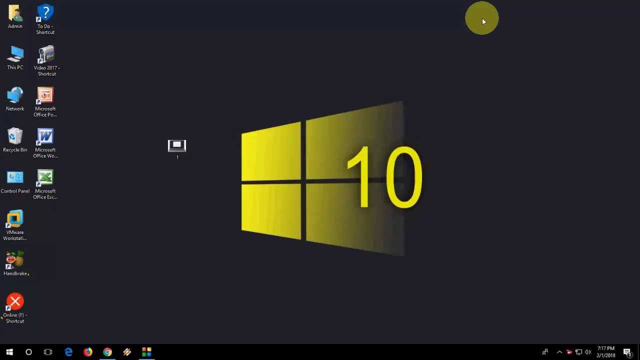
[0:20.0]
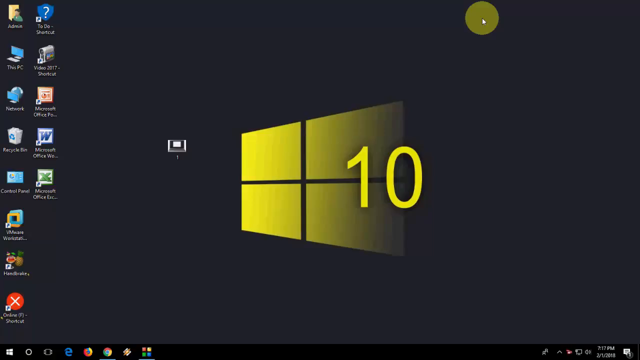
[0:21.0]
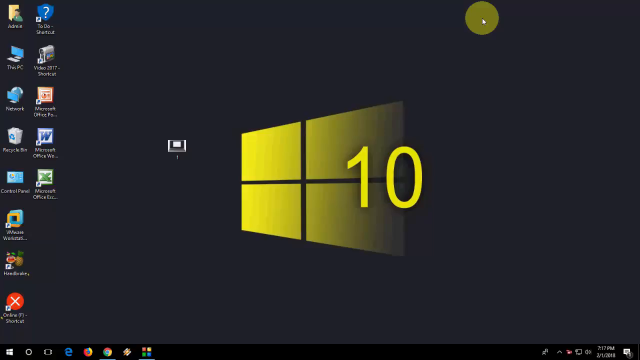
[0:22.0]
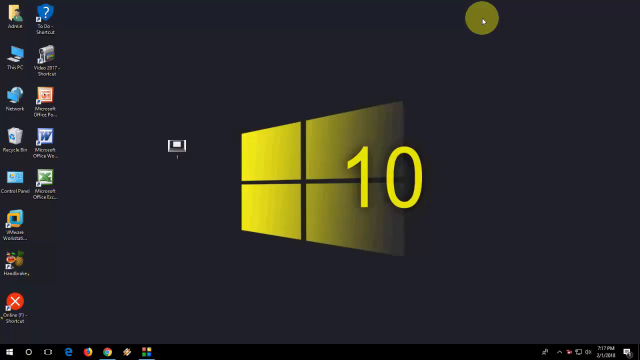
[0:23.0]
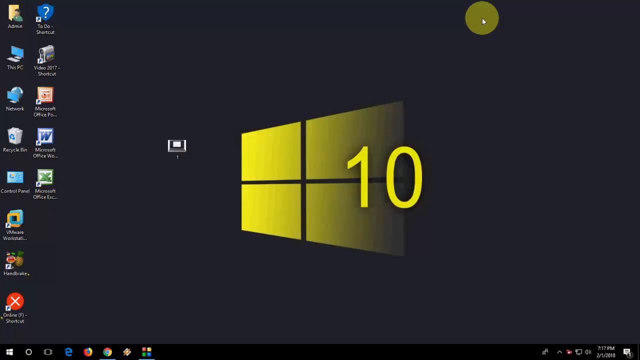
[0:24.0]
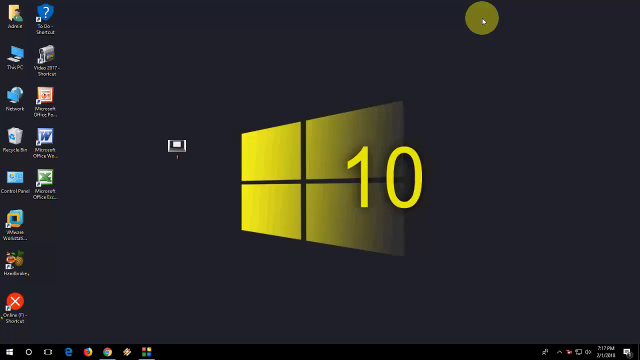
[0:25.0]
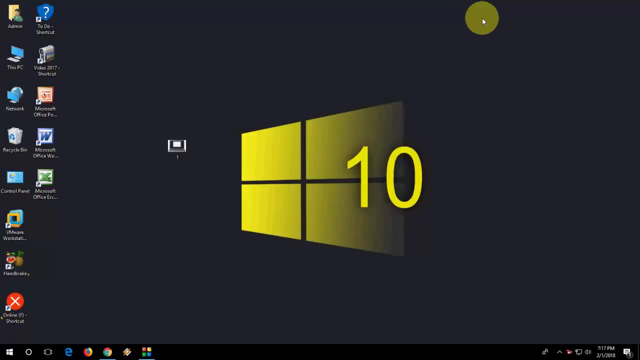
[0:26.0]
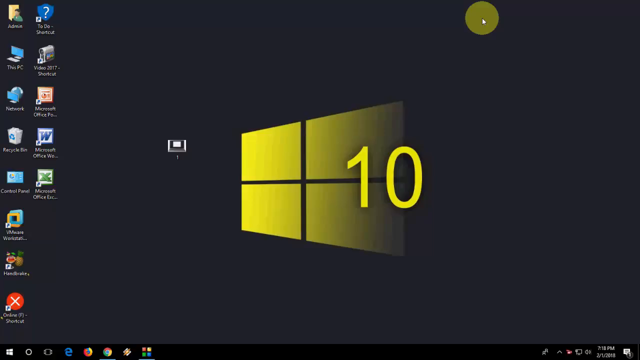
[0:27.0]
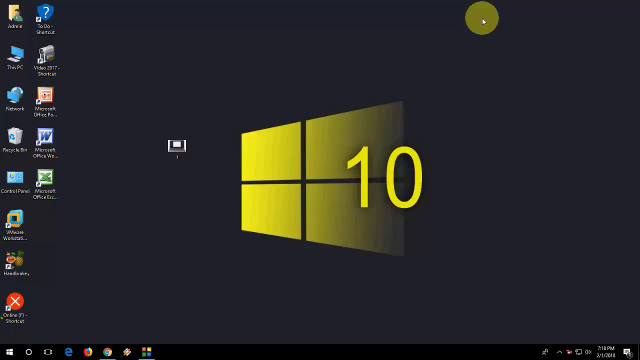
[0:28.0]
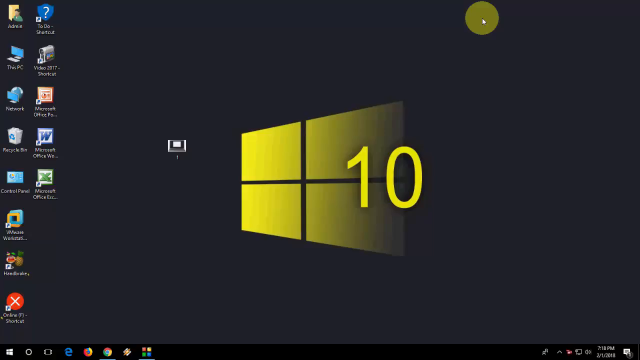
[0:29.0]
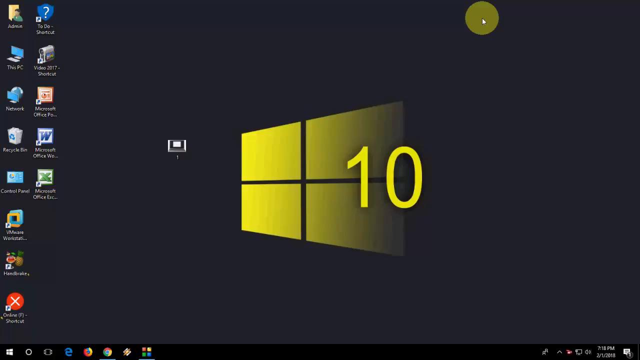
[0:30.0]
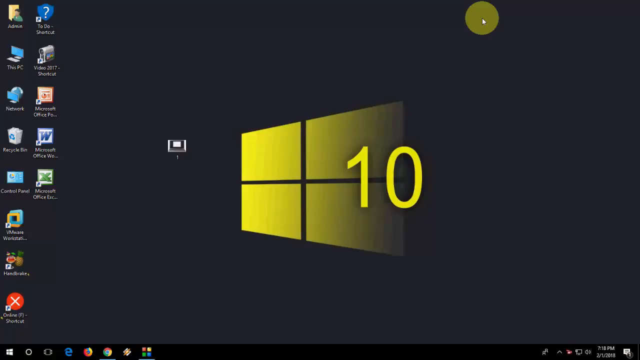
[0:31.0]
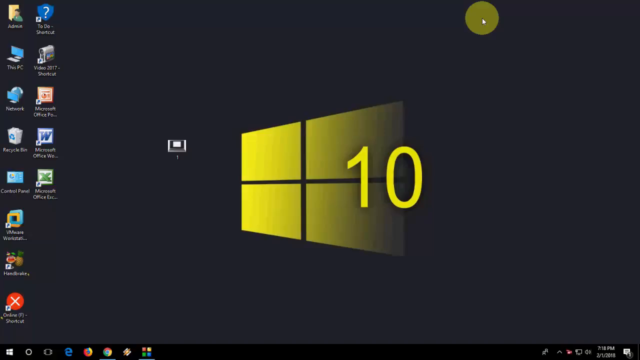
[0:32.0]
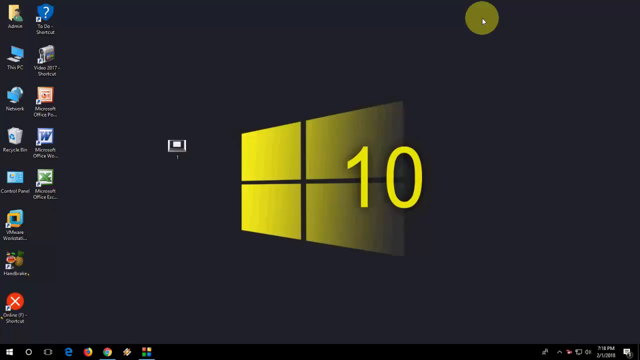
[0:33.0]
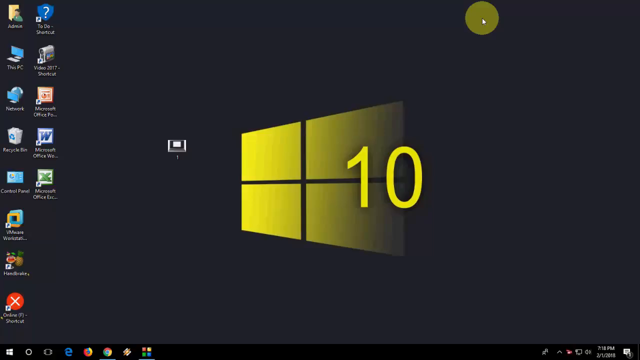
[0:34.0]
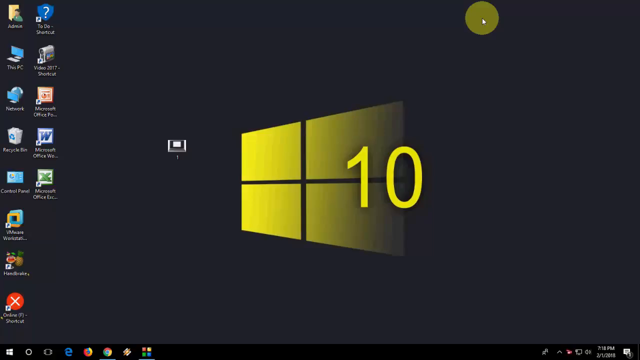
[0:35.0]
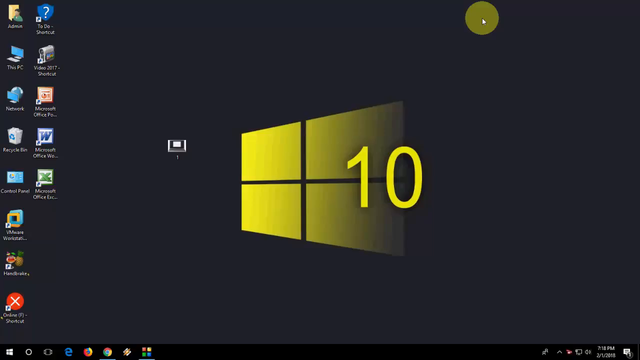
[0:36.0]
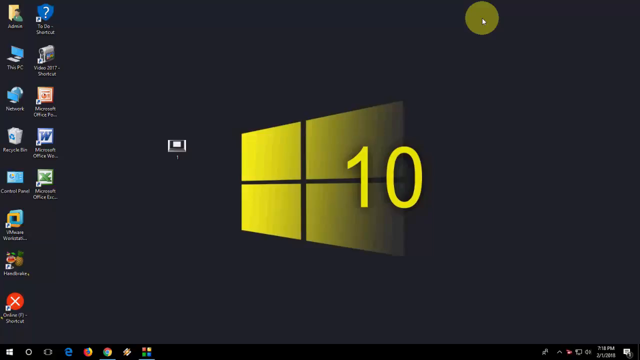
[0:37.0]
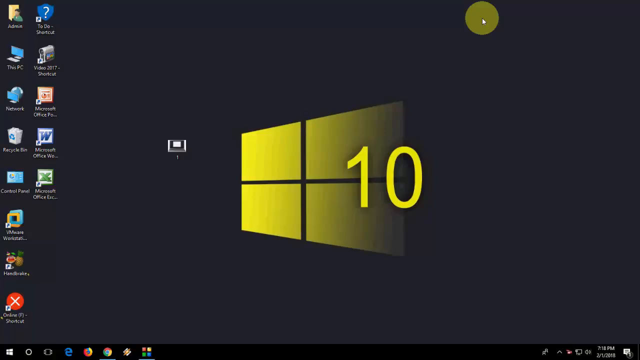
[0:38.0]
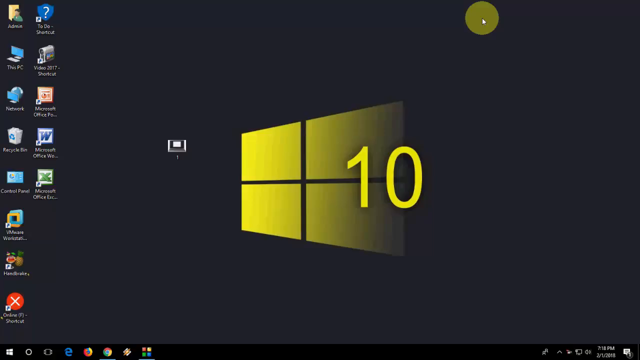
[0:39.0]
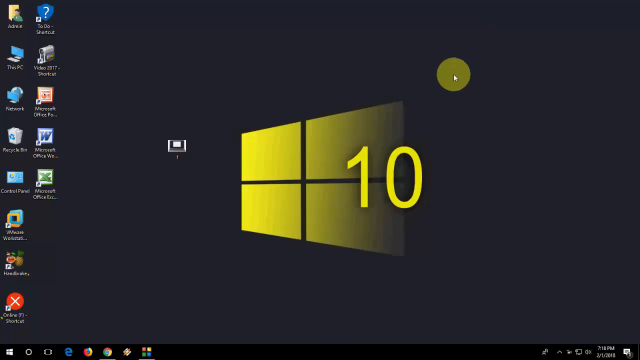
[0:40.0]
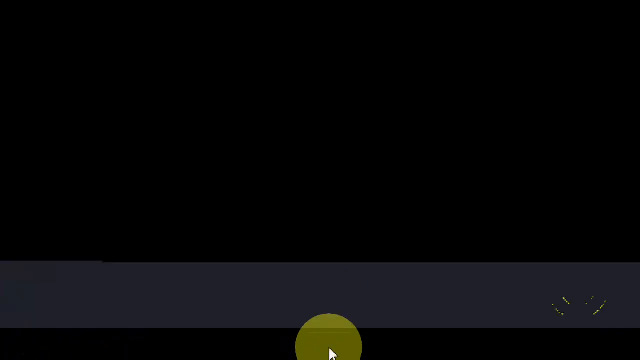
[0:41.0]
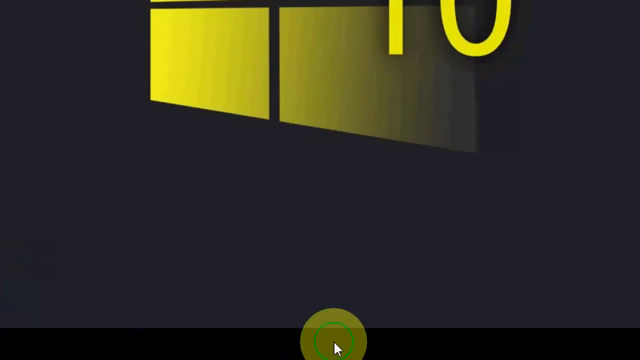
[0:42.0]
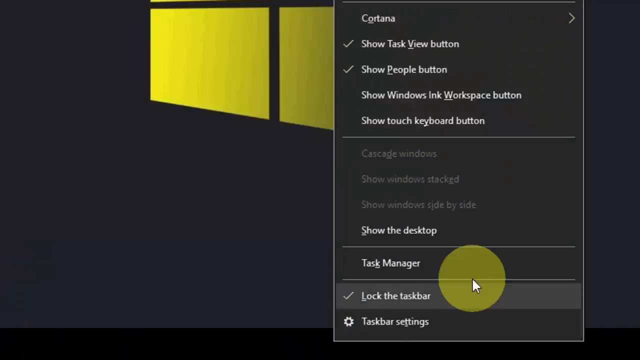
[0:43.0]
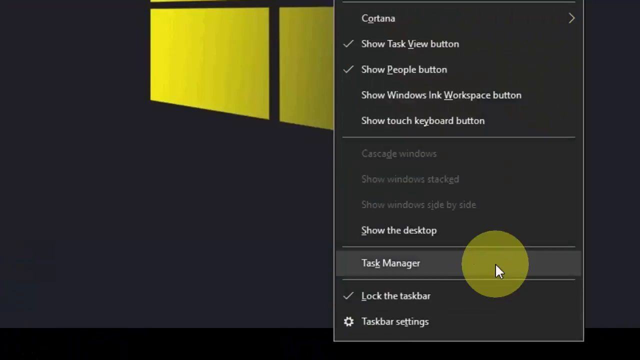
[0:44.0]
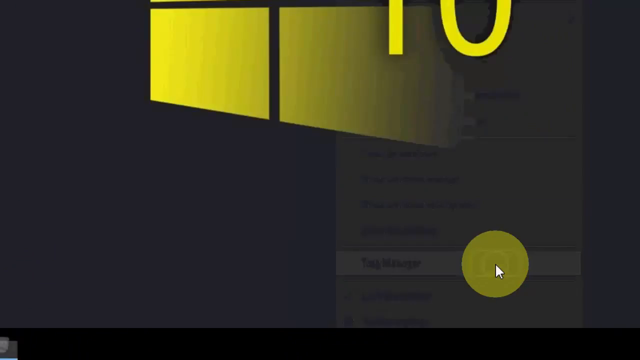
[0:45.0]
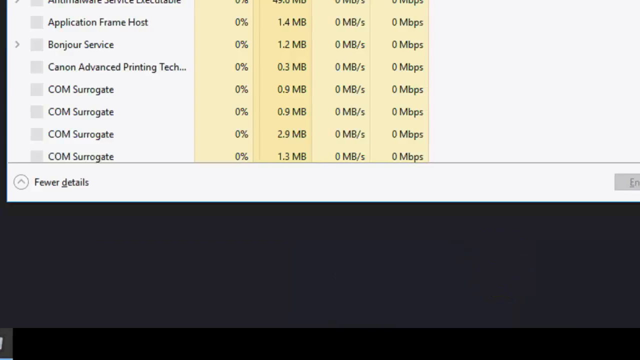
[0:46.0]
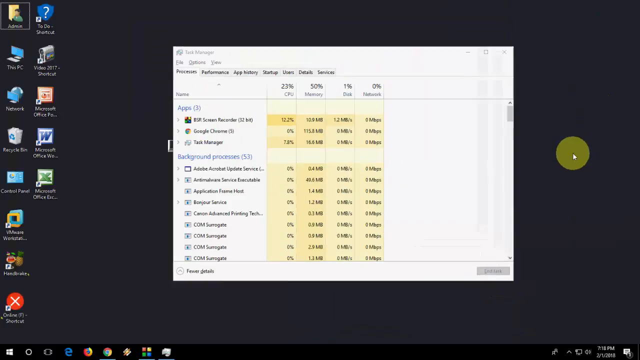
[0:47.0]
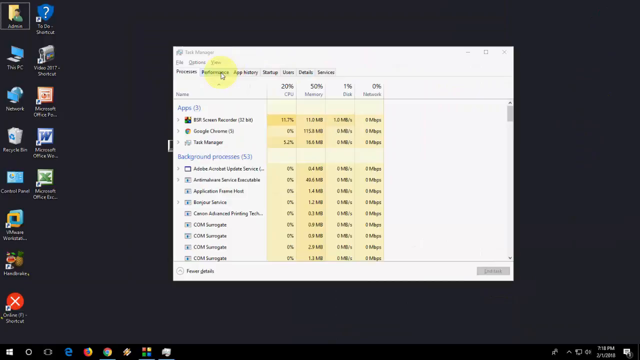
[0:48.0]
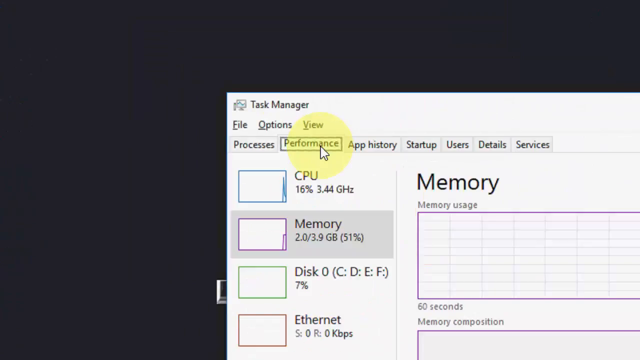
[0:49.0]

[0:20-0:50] The view is still on the desktop. There is no movement until the mouse moves down to the taskbar. The camera approaches that position to show the user right-clicking and going to choose the Task Manager option. The Task Manager has 7 tabs: Processes, Performance, App History, Startup, Users, Details and Services. The user brings the mouse to the Performance option, and just as he is about to click it, the video cuts abruptly.